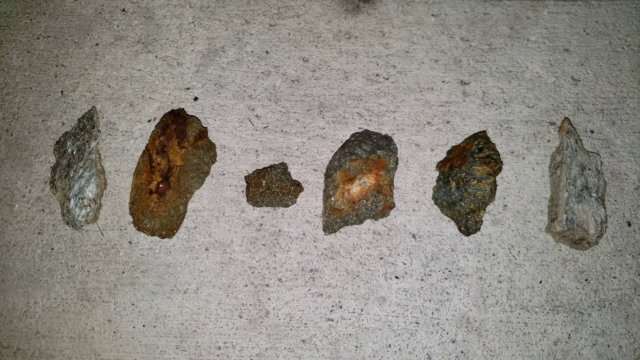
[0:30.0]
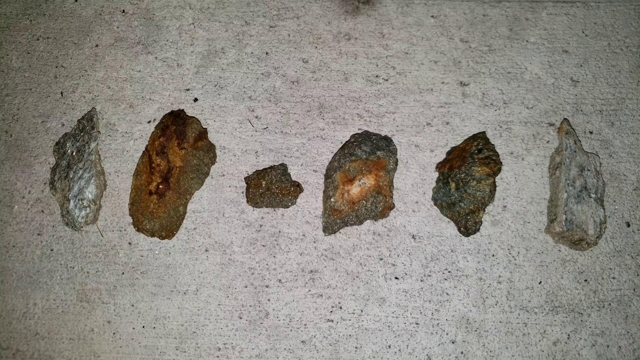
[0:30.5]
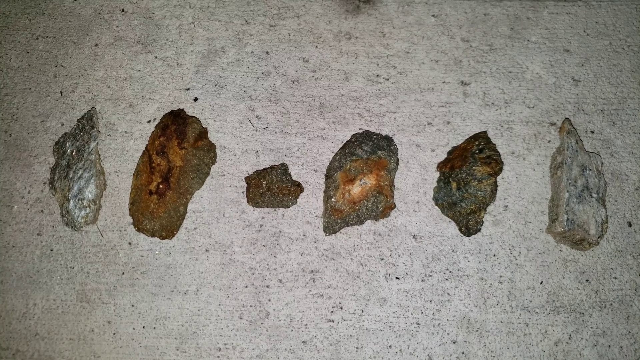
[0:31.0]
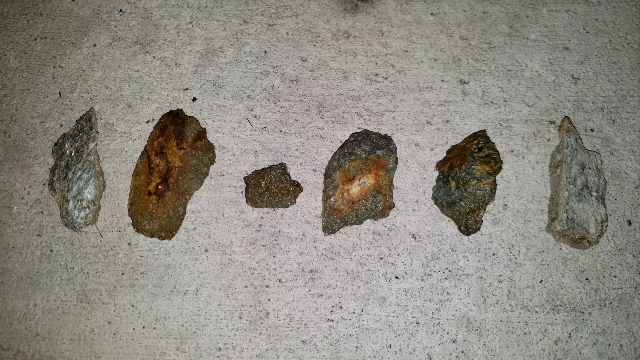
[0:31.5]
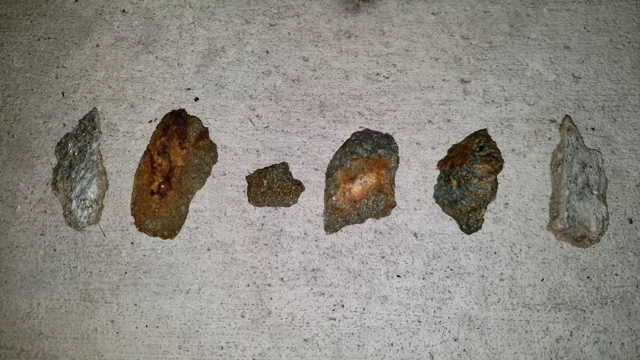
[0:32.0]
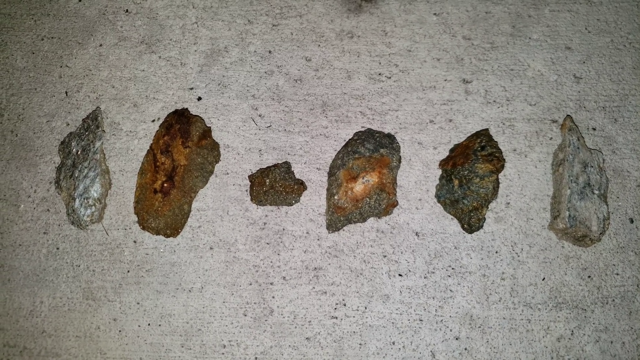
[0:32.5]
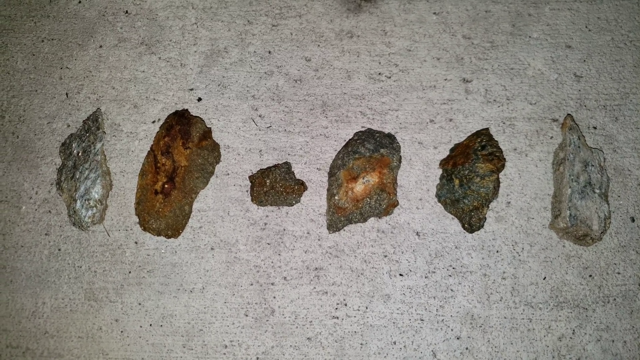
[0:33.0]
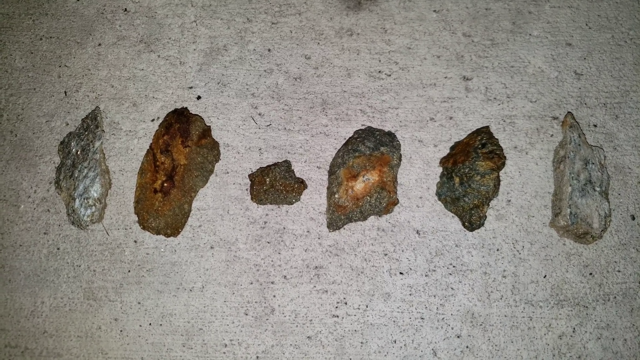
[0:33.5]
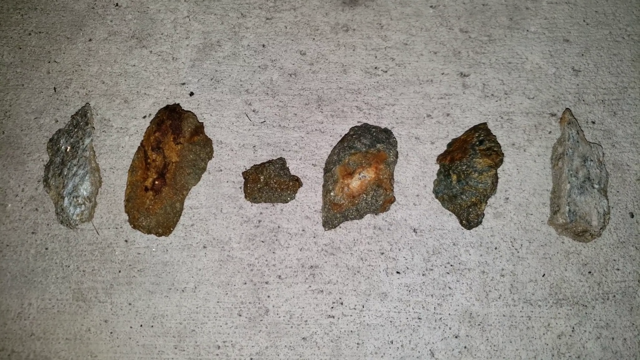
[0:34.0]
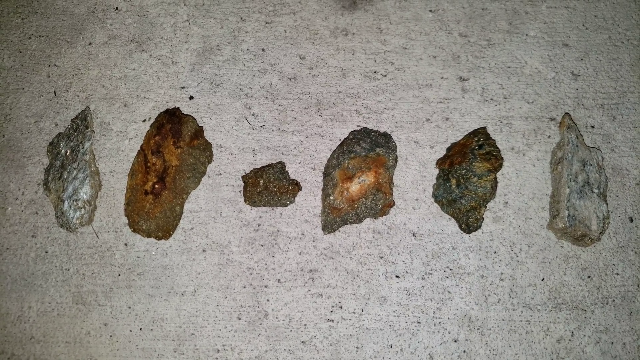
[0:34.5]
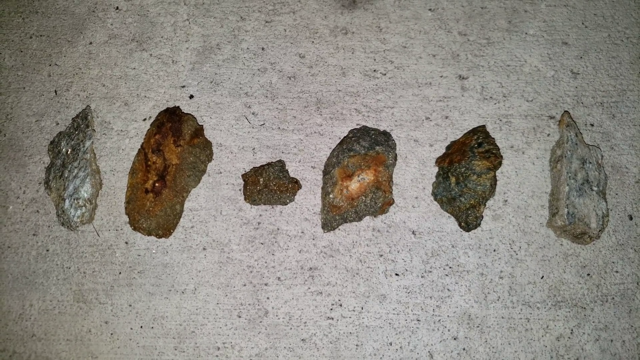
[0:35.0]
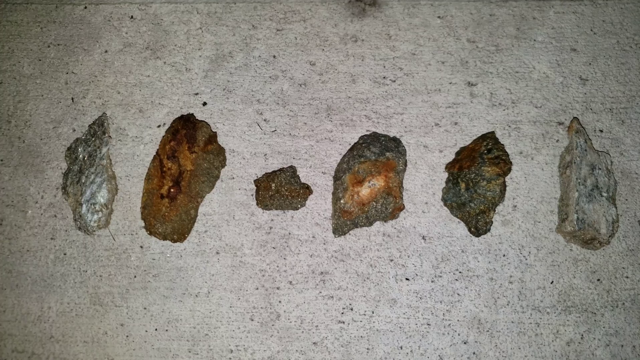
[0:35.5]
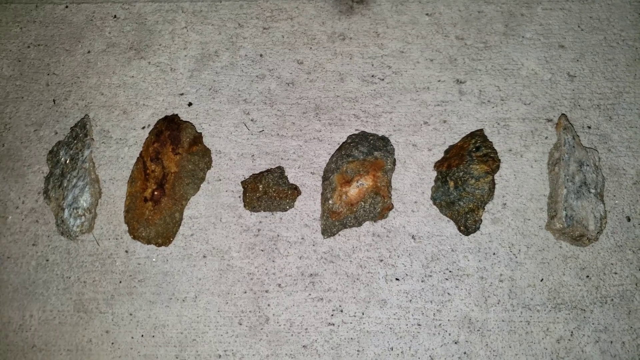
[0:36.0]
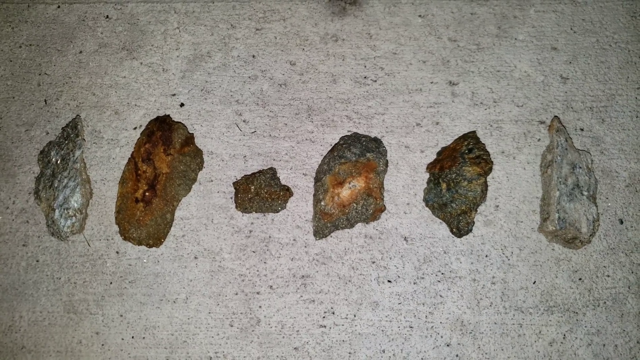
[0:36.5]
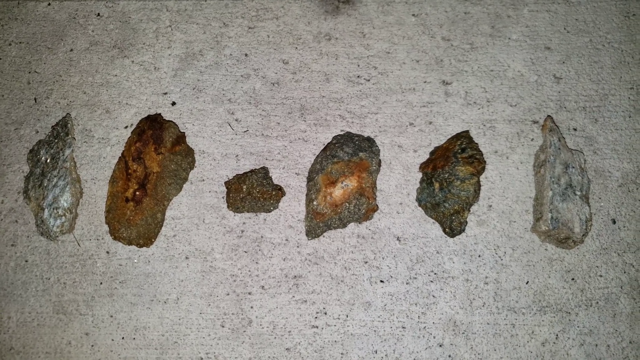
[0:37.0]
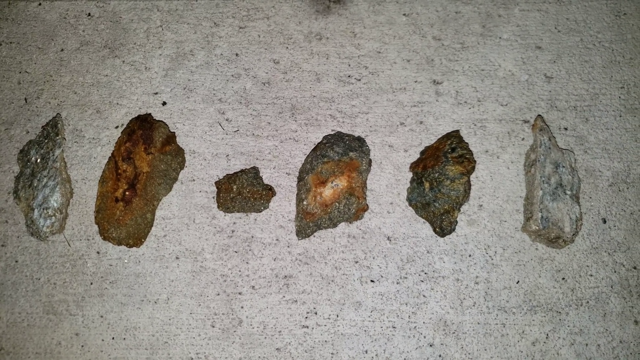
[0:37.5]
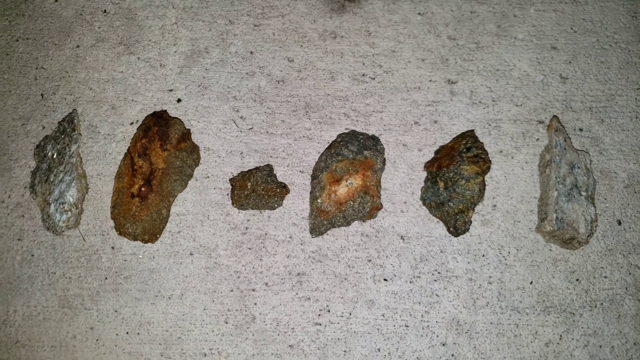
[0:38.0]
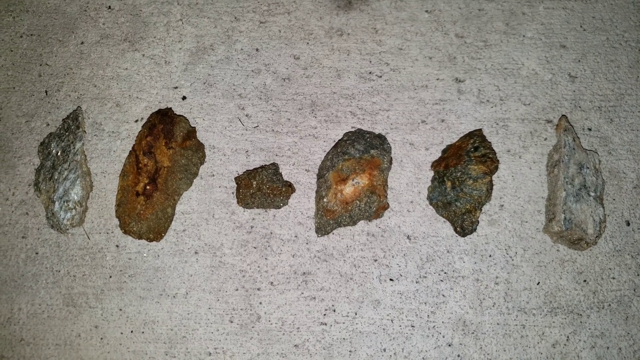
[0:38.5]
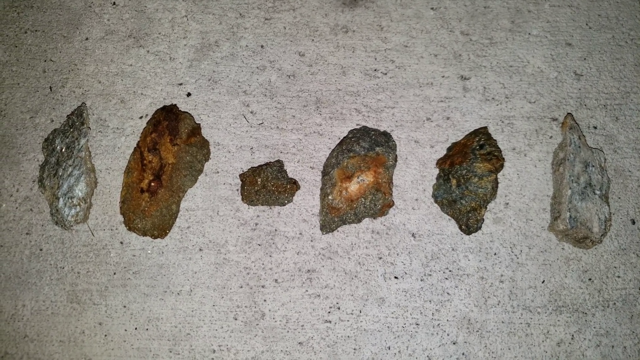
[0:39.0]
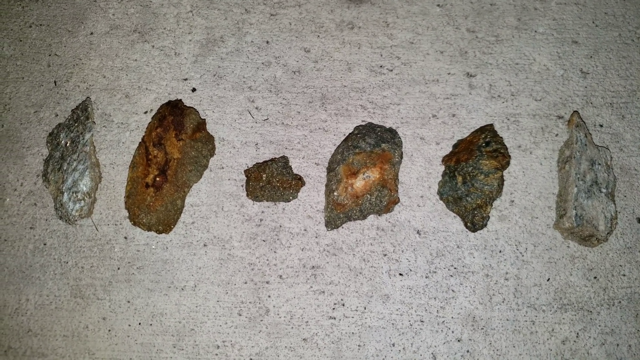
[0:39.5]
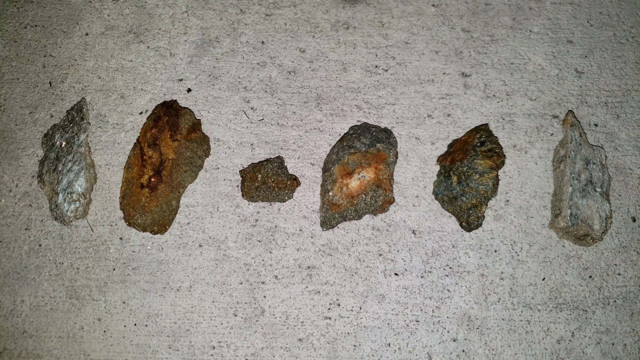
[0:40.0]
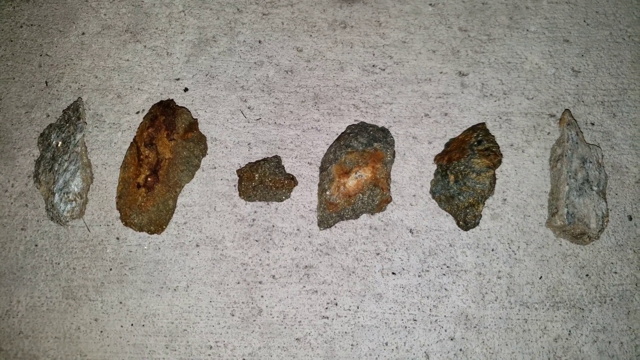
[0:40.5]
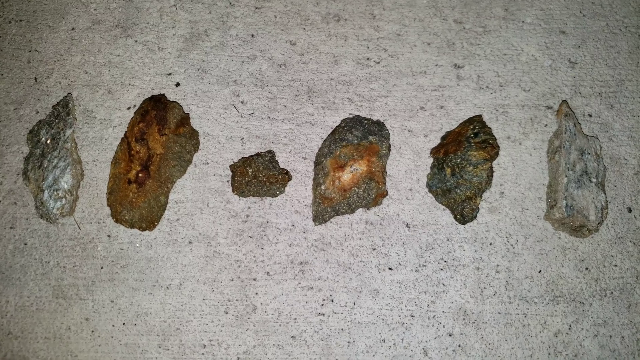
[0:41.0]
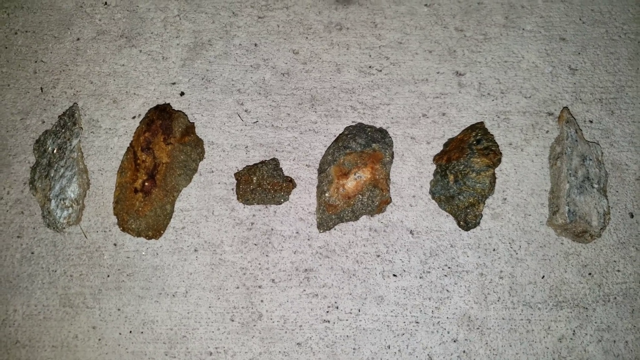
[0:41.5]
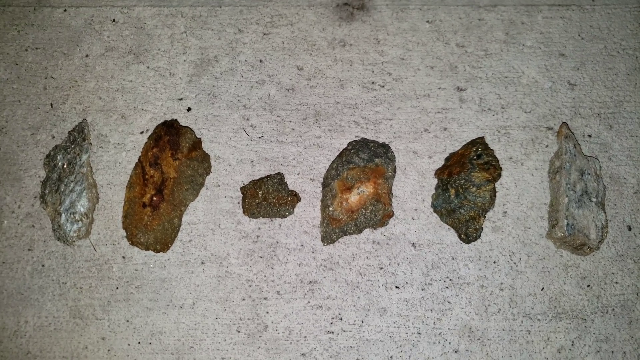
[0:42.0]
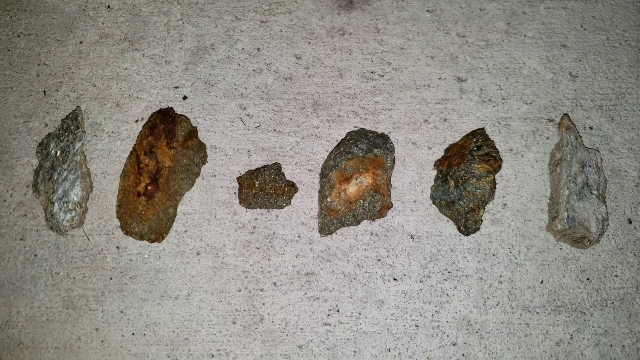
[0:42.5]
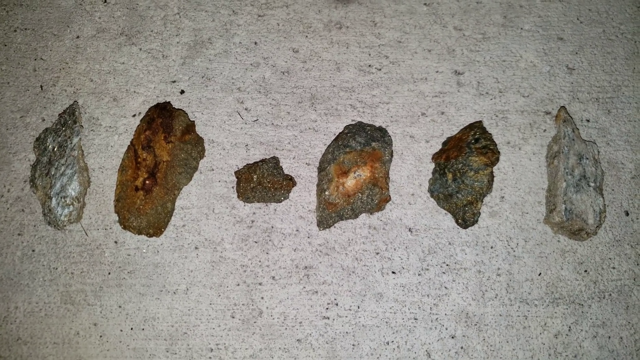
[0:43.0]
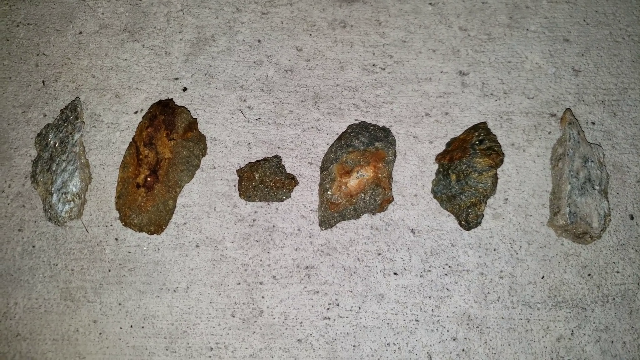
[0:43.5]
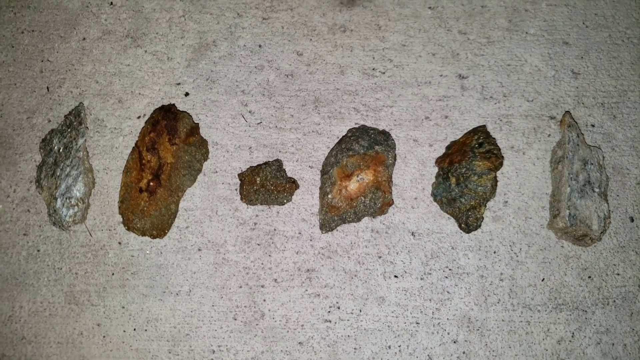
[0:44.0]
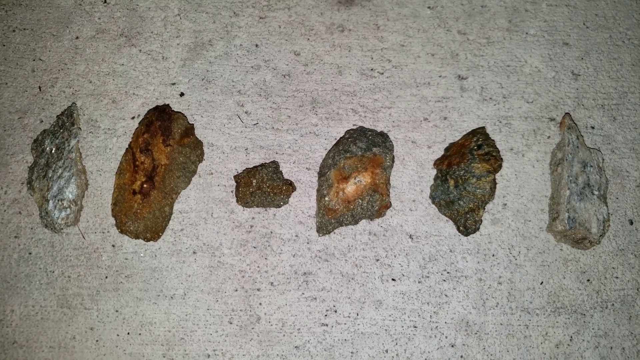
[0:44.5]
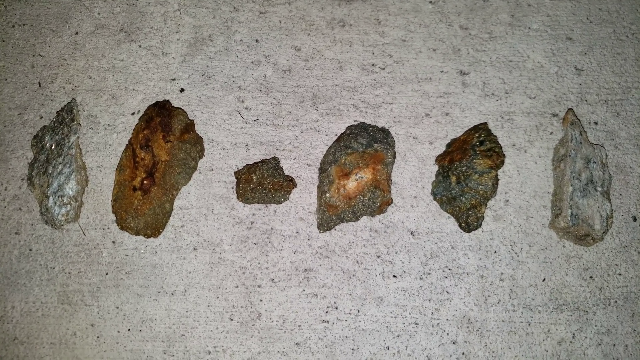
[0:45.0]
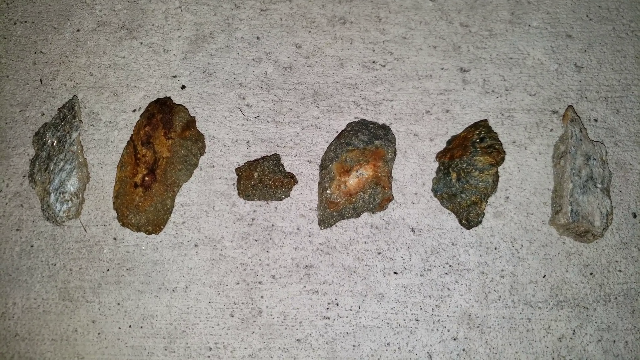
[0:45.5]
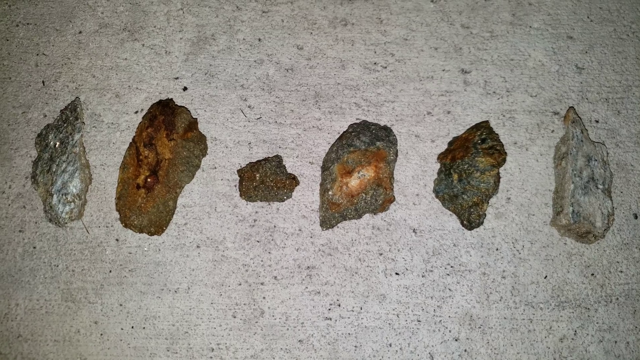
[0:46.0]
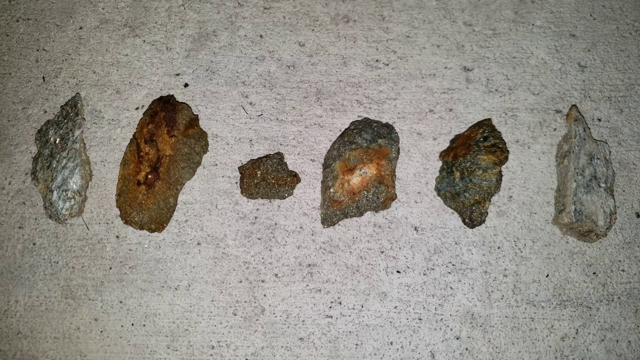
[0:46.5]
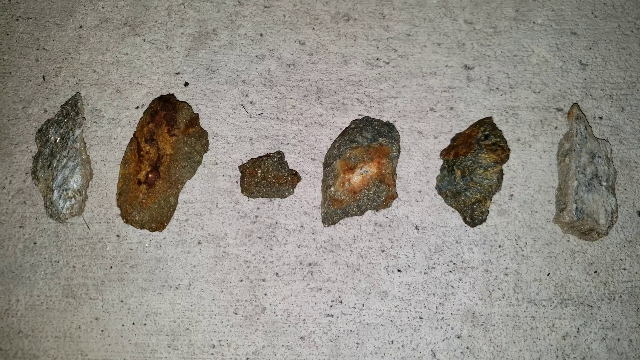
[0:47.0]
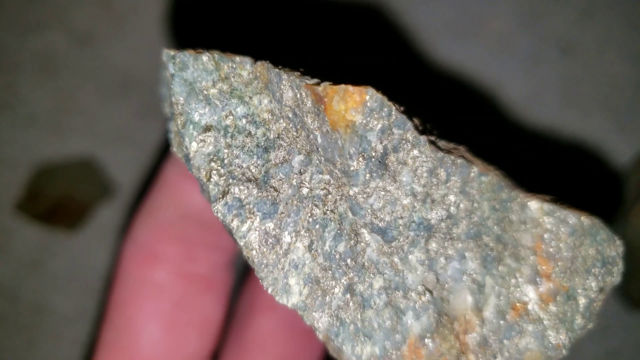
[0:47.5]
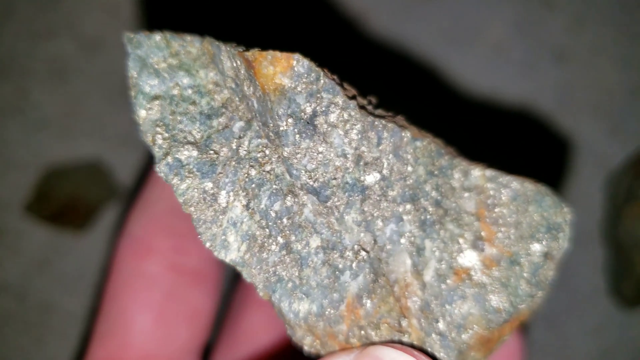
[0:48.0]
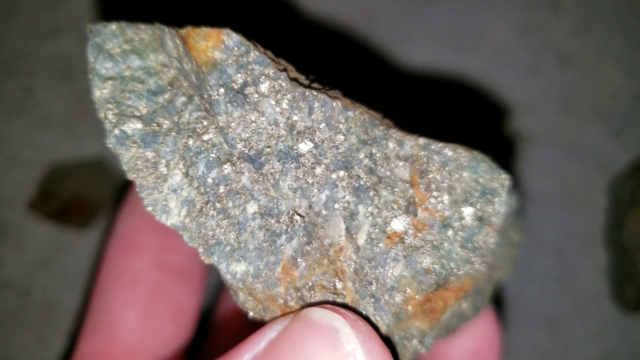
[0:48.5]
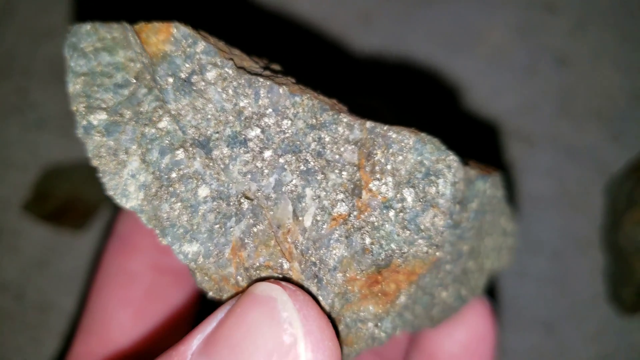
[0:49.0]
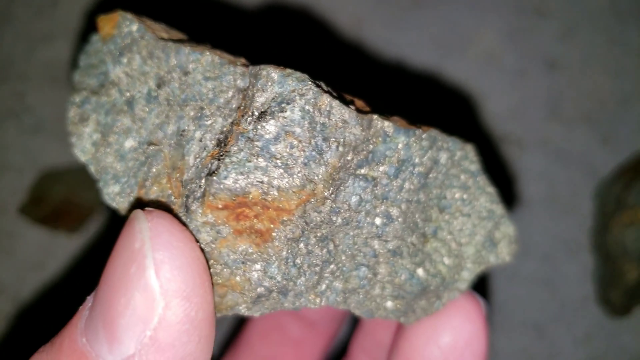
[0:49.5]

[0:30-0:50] The six stones are arranged in a row in the centre of a white-grey piece of stone or material with black flecks. The first stone has a silver-type composition with a pointed edge at the top. The second is more brown, with a pattern on the surface and more rounded edges than the other stones. The third is smaller, approximately a third of the size of the others, and darker. The fourth has a point at the left corner and a rounded top. The fifth has a slightly rounded bottom and a pointy top and is darker grey with some brown. The sixth is lighter in colour than most of the other stones, with a point at the top and a rounded edge. The camera shakes slightly. Then a person's hand holds a piece of rock roughly the size of a palm. The rock is three-dimensional and made up of different colours, with blue, silver, white and brown sections, and it sparkles in the camera light. The person turns the rock for the camera to view.